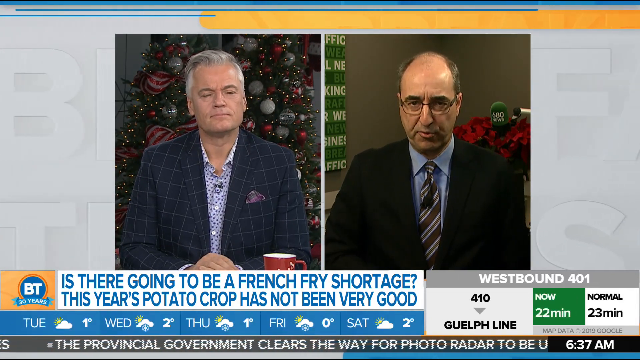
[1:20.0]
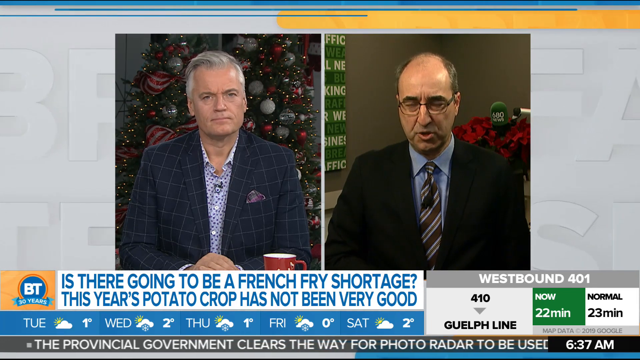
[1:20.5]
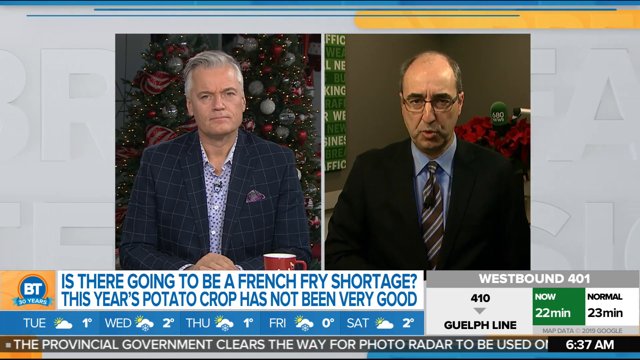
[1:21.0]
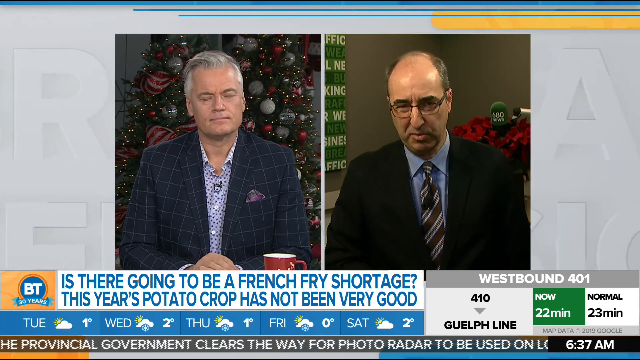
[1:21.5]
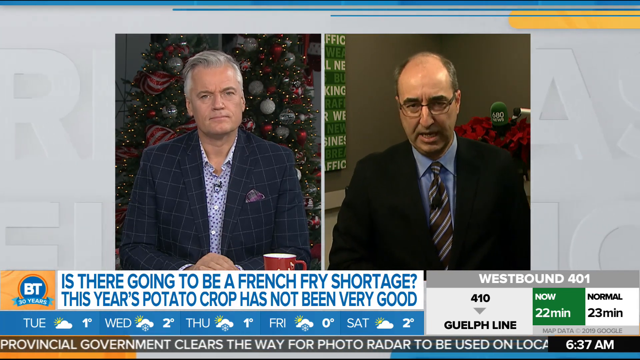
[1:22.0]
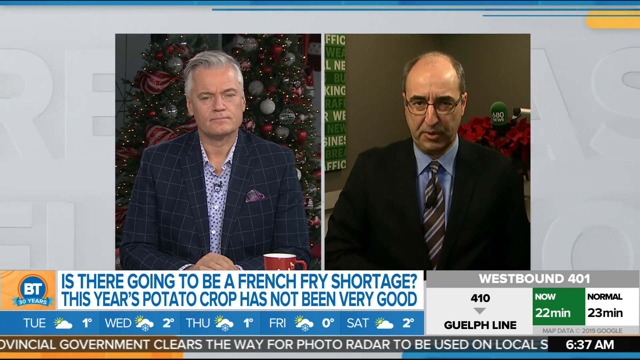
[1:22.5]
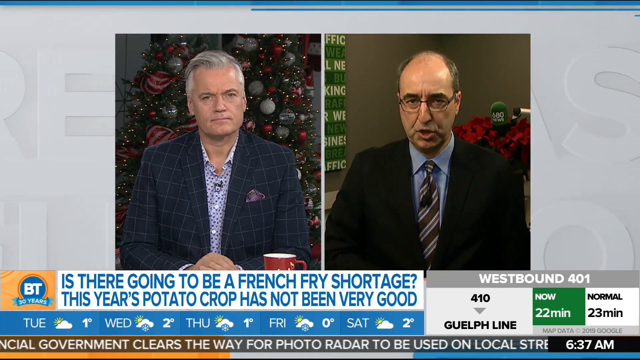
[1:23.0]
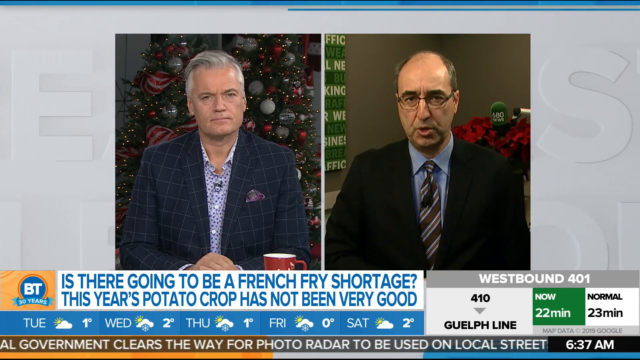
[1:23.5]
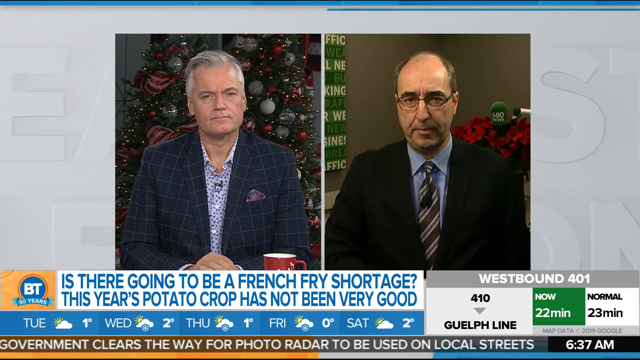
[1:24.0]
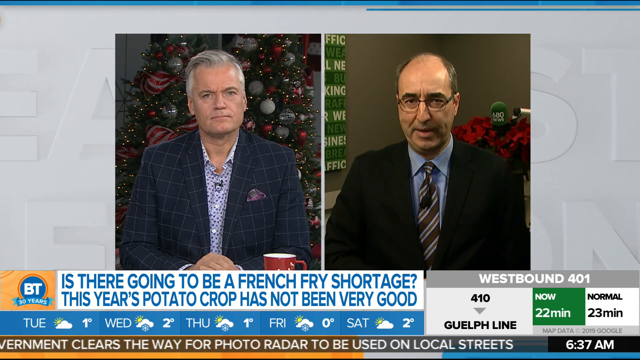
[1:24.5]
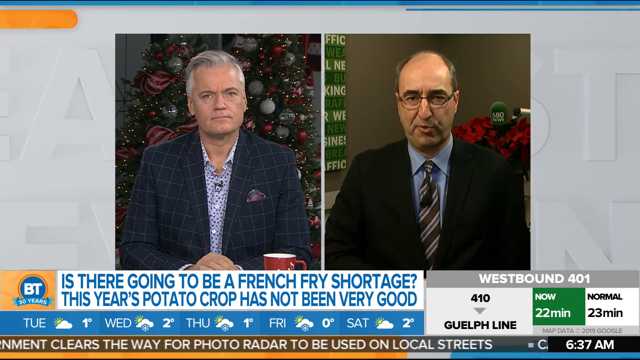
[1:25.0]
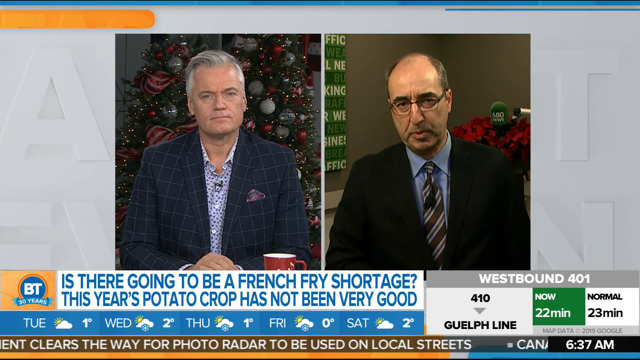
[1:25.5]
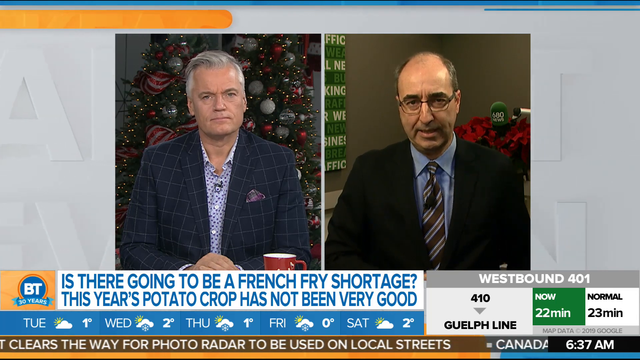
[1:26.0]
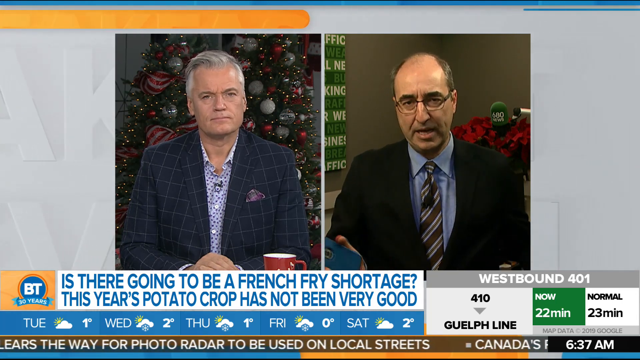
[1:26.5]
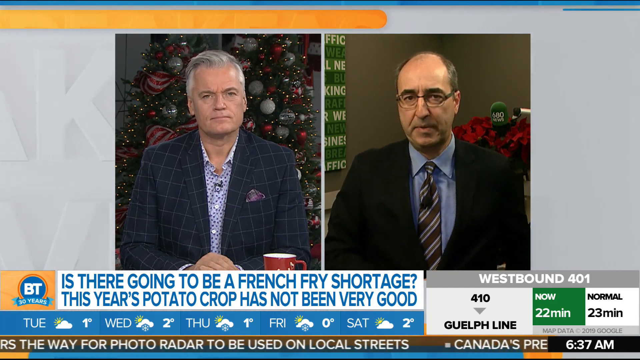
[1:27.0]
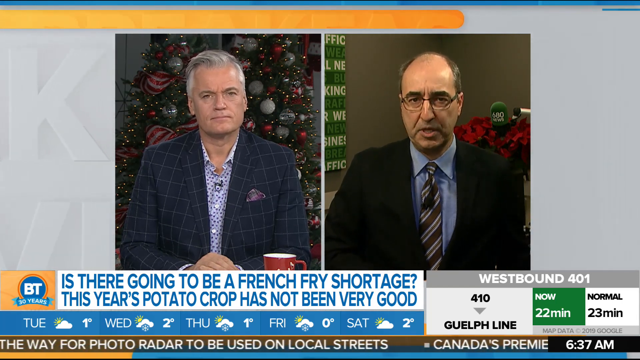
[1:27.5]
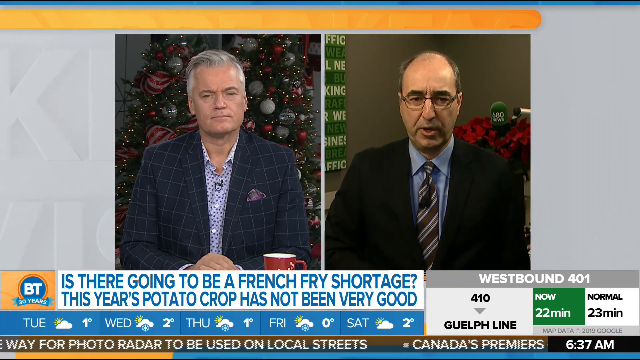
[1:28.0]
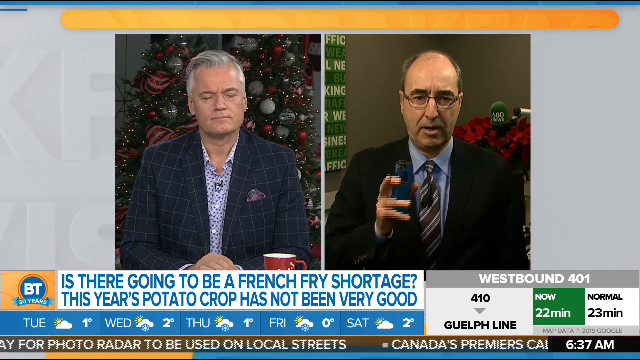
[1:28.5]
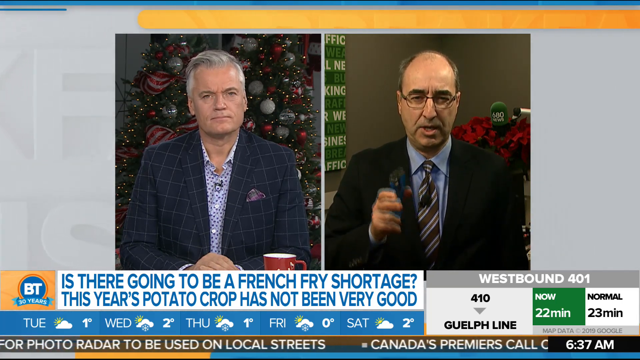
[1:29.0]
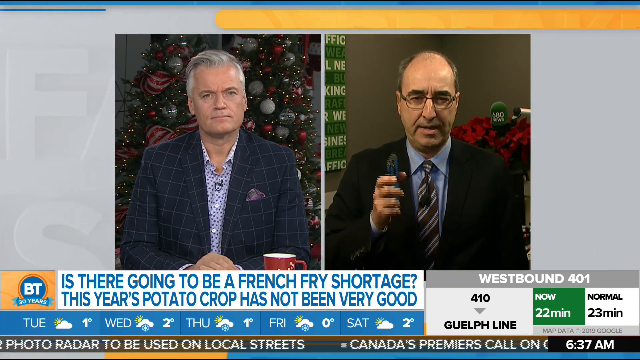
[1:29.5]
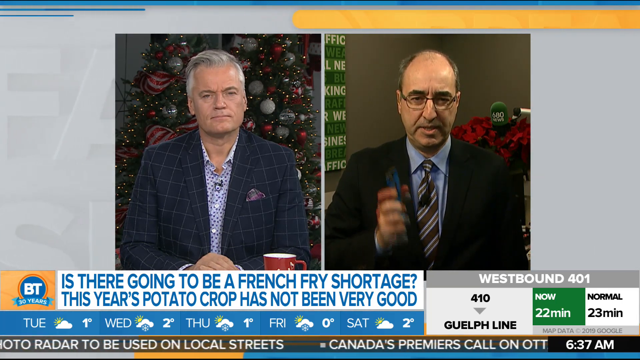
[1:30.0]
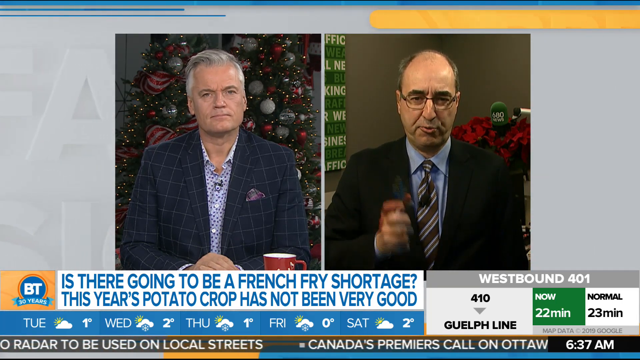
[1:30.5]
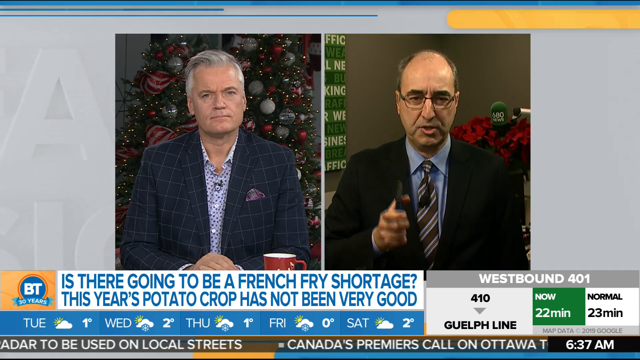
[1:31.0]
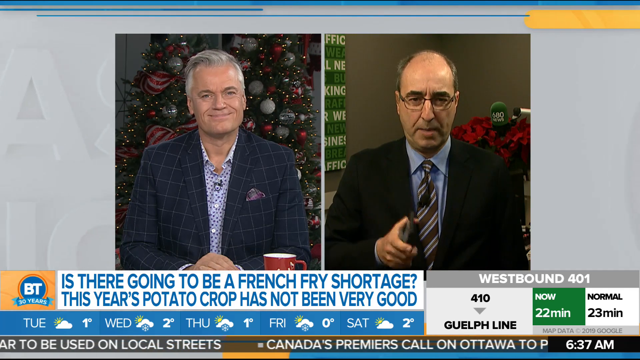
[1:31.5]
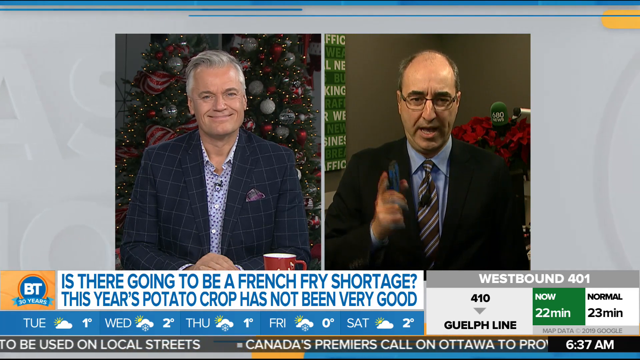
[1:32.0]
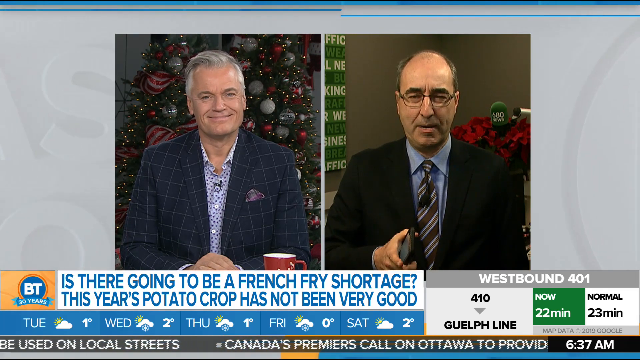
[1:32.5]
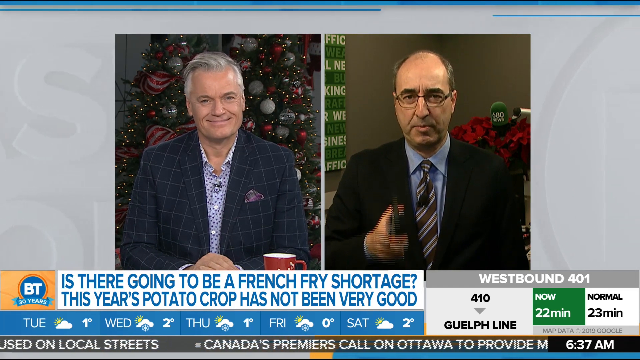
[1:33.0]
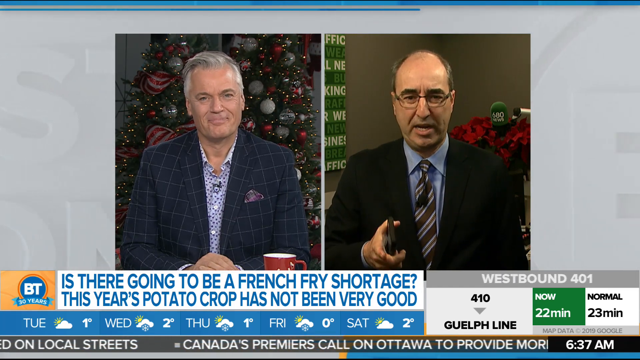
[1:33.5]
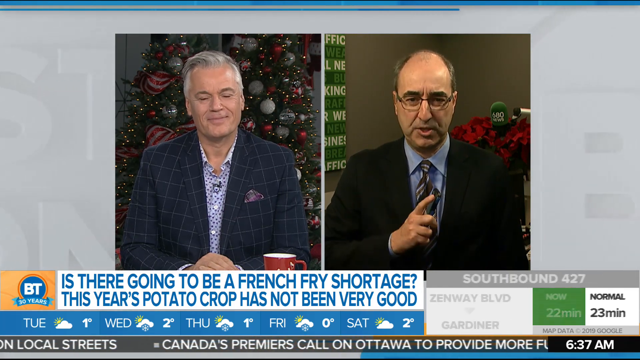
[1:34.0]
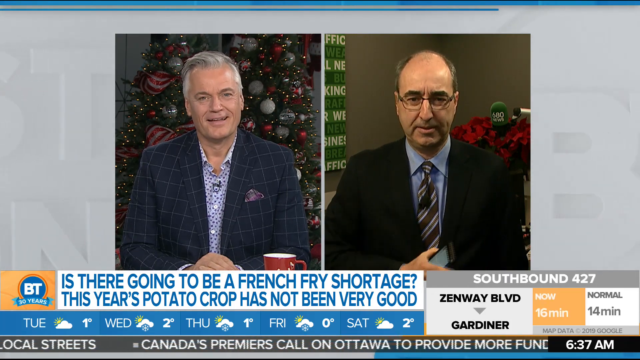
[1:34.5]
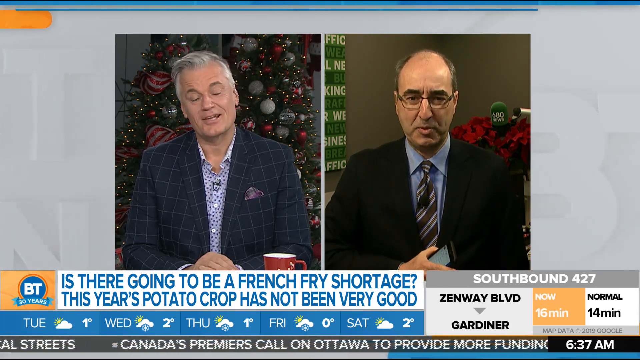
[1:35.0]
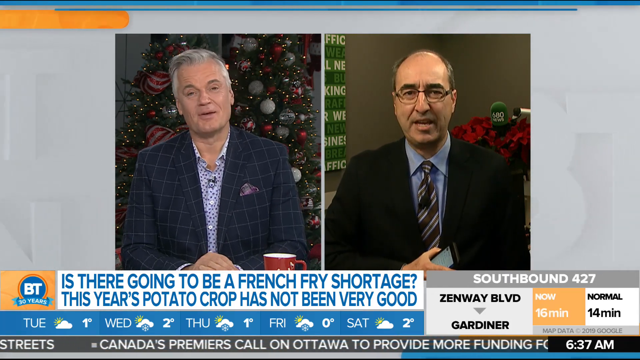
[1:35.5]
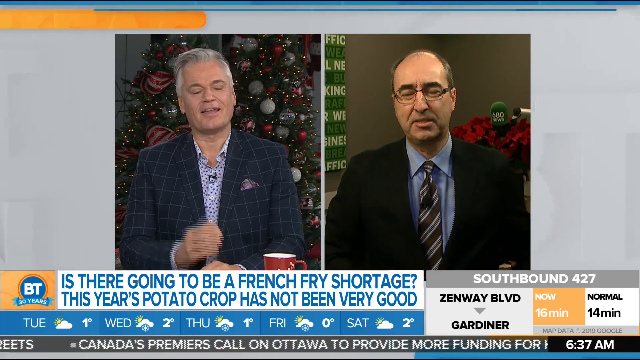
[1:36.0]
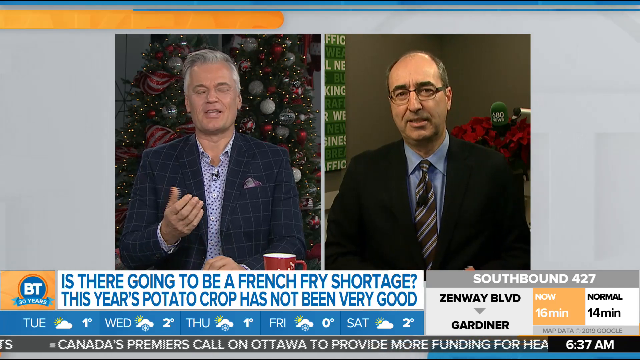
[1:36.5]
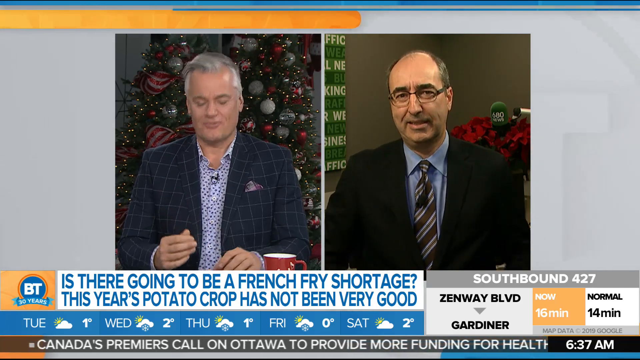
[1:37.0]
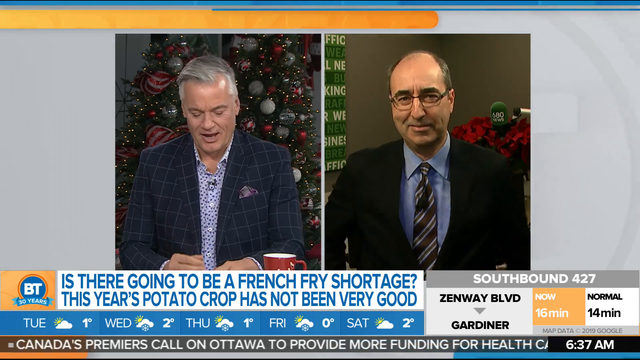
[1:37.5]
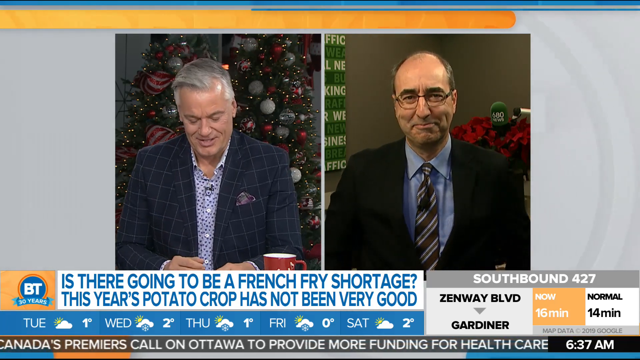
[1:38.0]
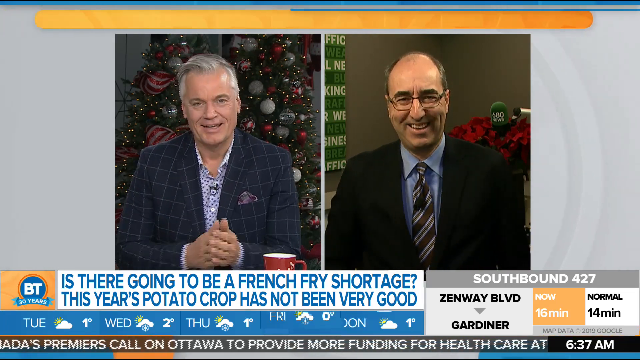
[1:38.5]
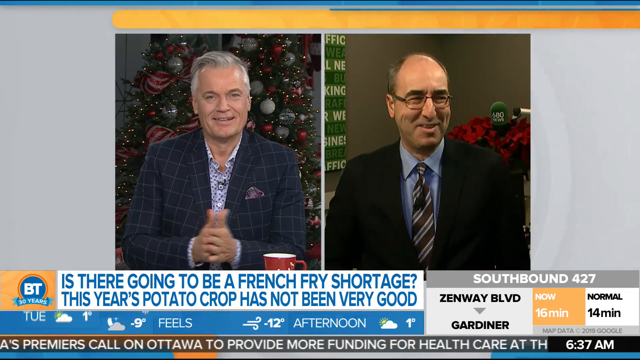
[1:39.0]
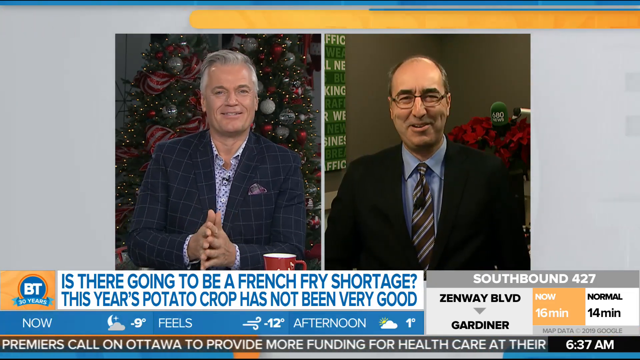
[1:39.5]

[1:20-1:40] A BT News segment shows the emblem in the bottom left: "BT" in white in a blue circle with a red outline, and a banner reading "30 years" below the circle in a yellow square. To the right, a long white rectangle reads "Is there going to be a french fry shortage? This year's potato crop has not been very good." A weather report for Tuesday to Saturday is beneath these boxes, and on the lower right a gray and white box shows a traffic update for westbound 401. Above, a split screen shows two news anchors, one on the left and one on the right. The anchor on the right looks to be in his late 40s or early 50s, with gray hair, a black suit with white stripes, and a white shirt with black polka dots; he rests his right hand on his left hand, which is on a desk out of view, and he is sitting in front of a Christmas tree. The man on the right looks to be in his late 40s or early 50s; he is balding and wears glasses, a black suit, a blue shirt, and a striped white and black tie. The two men talk. The man on the right slightly moves his hands upward to gesture, and it appears he has a black smartphone in his hands; he puts his hand back down, then puts his hand in front of the center of his body and points with his right hand, holding the smartphone, toward the camera. The man on the right takes his right hand off his left hand and lifts it slightly so the fingers point into the air, brings his hands back down to the desk, rubs them together, and rests his right hand on top of his left hand.